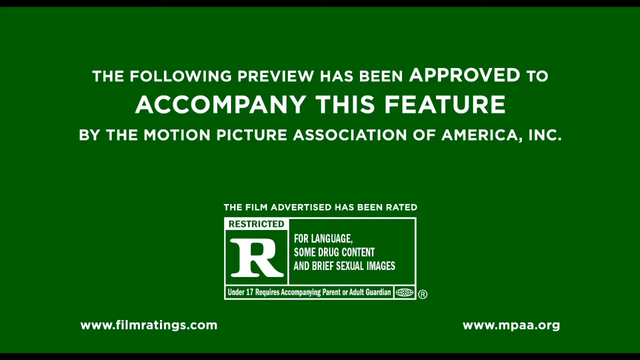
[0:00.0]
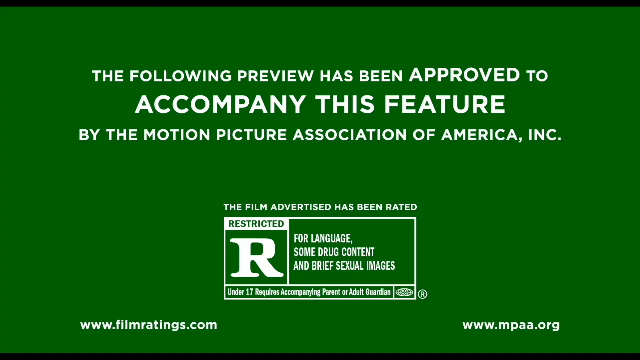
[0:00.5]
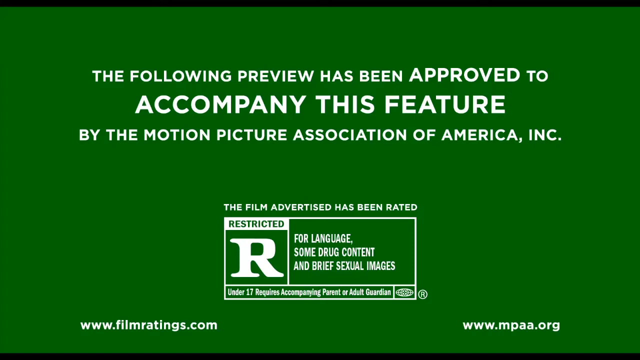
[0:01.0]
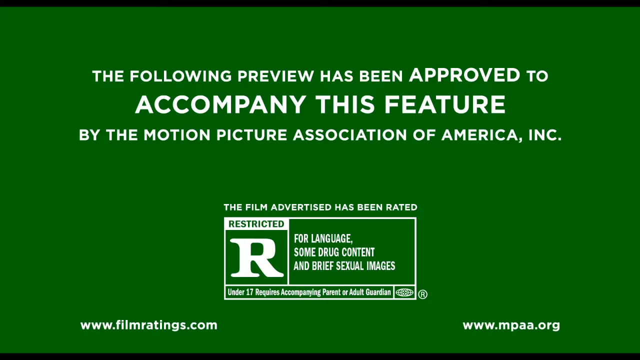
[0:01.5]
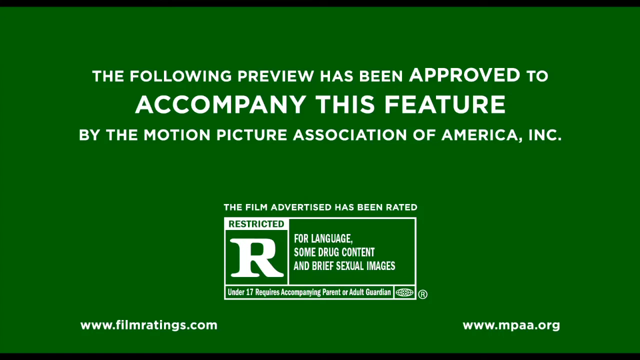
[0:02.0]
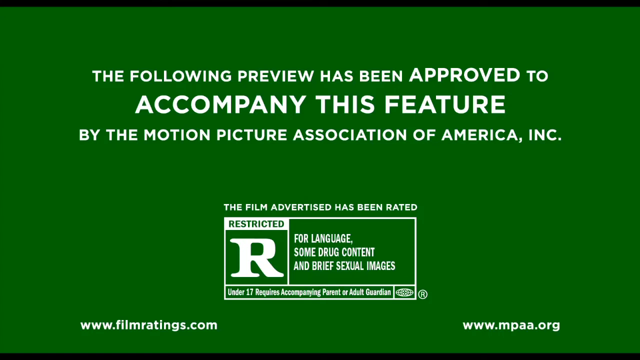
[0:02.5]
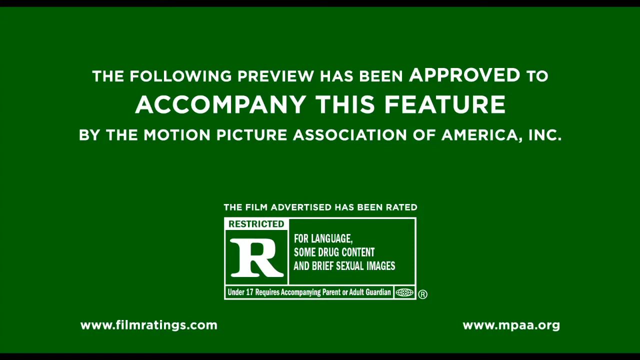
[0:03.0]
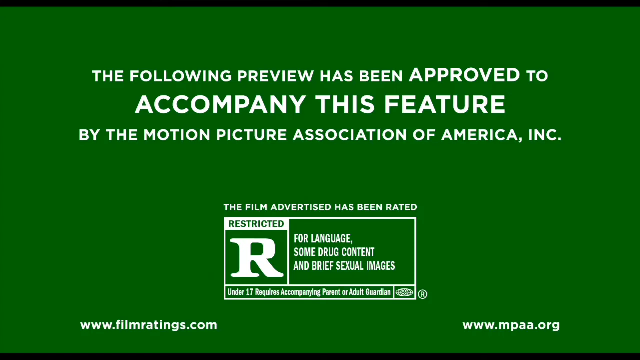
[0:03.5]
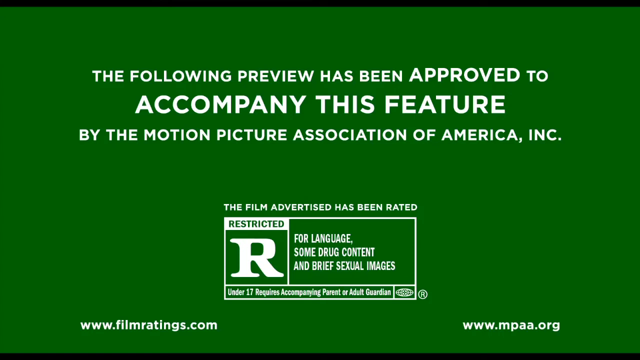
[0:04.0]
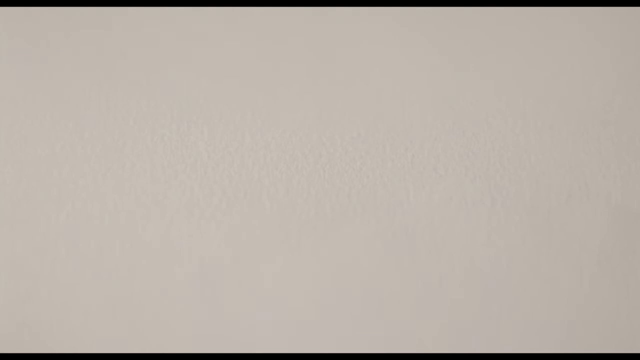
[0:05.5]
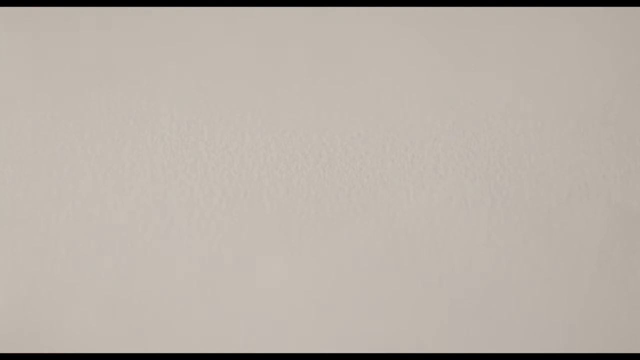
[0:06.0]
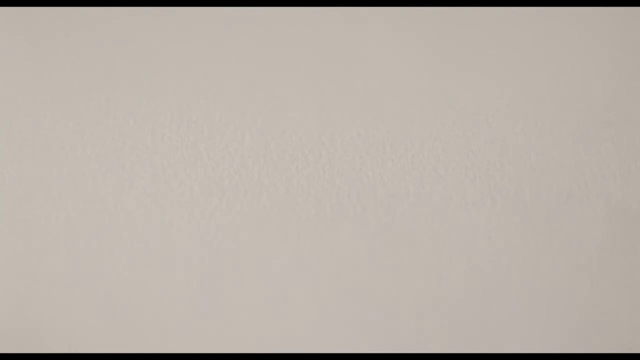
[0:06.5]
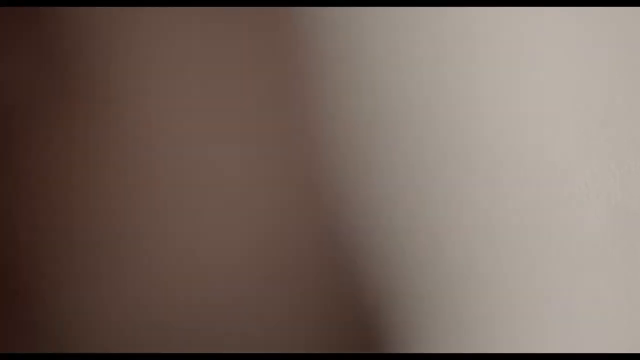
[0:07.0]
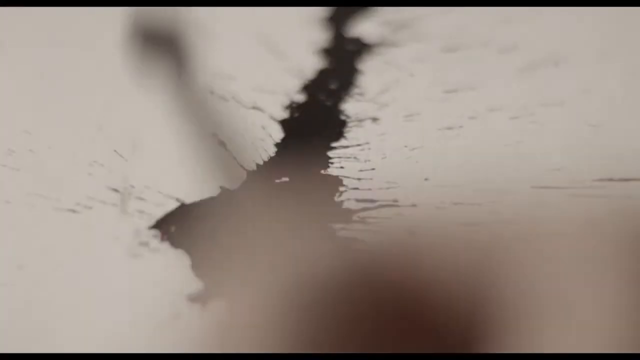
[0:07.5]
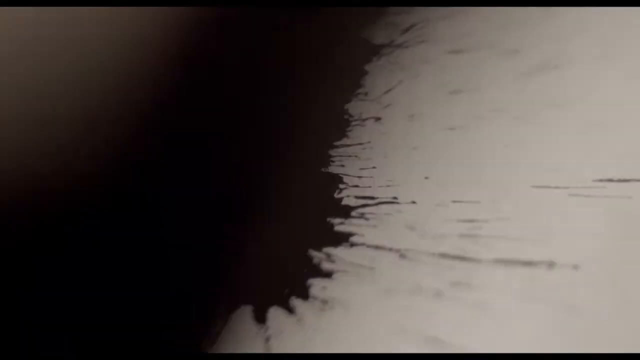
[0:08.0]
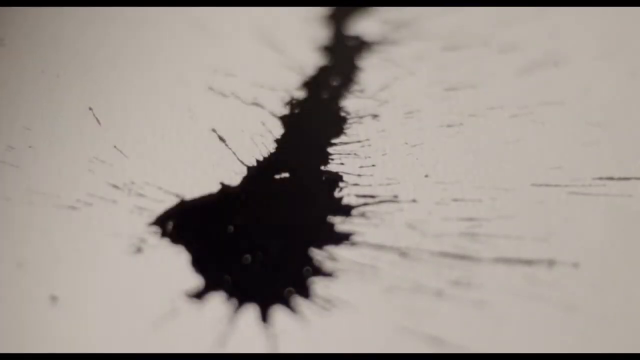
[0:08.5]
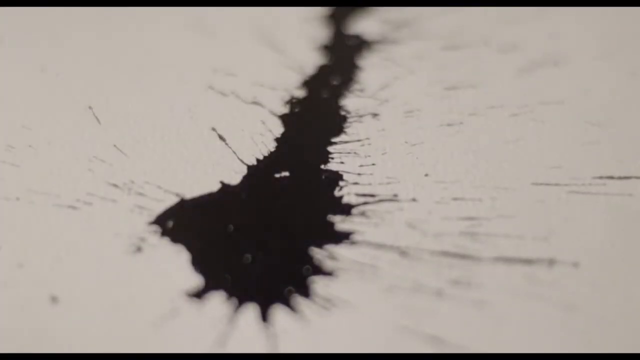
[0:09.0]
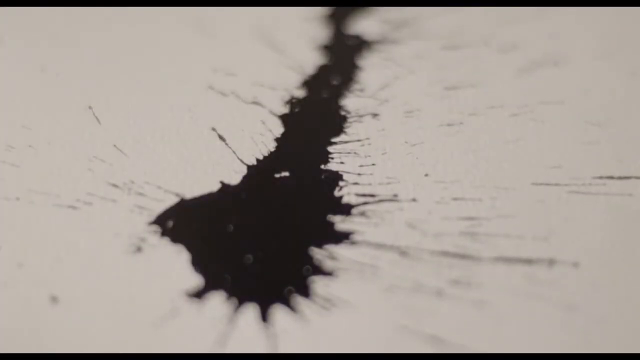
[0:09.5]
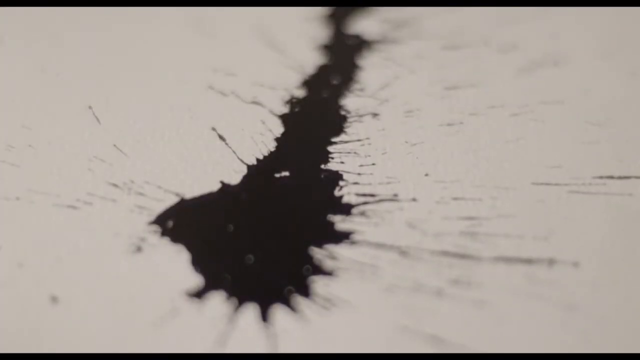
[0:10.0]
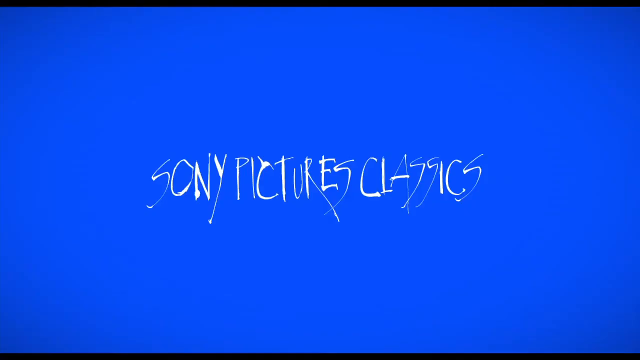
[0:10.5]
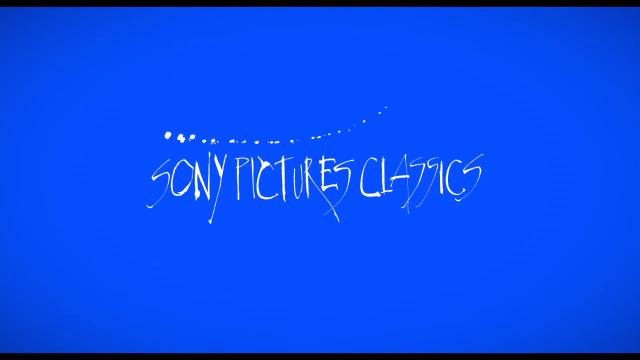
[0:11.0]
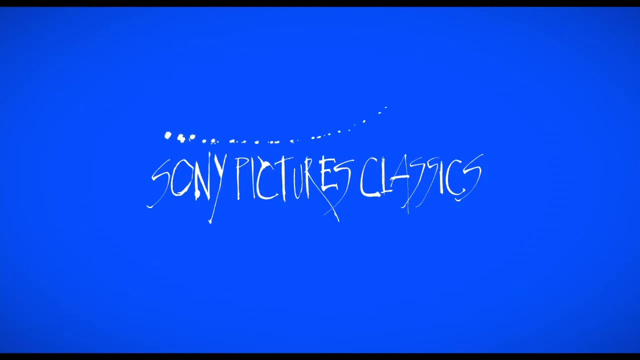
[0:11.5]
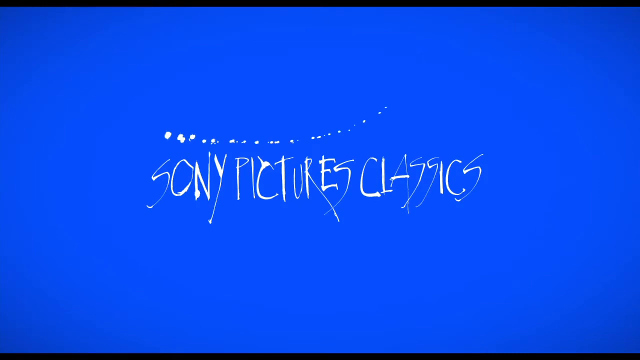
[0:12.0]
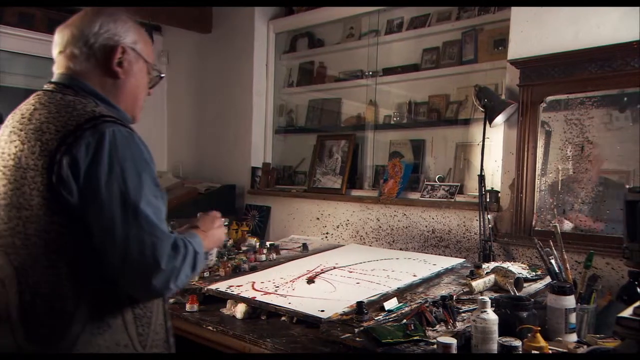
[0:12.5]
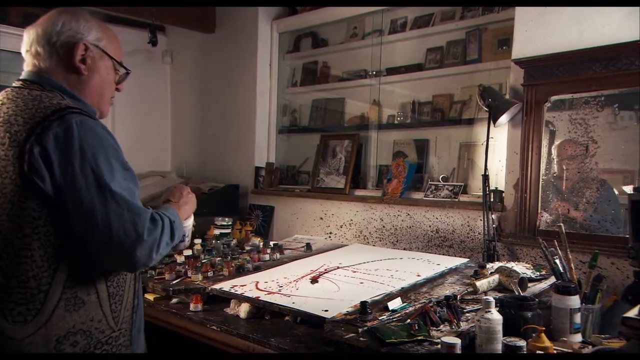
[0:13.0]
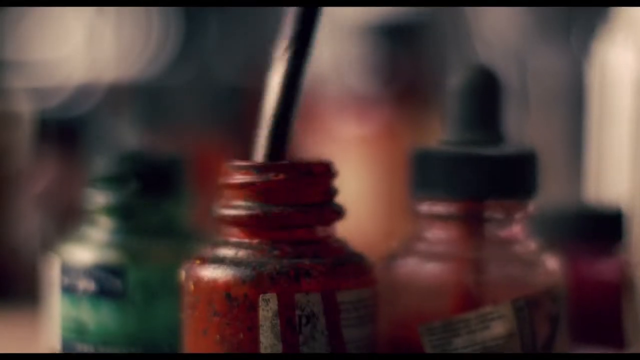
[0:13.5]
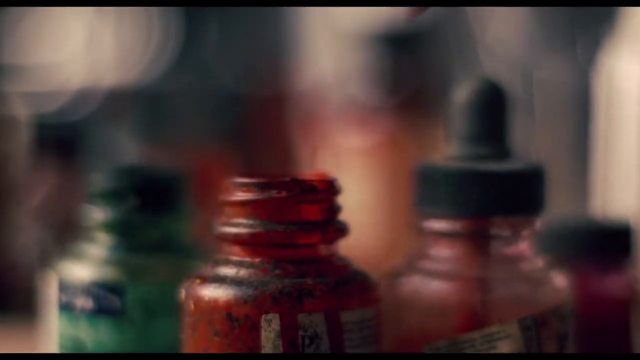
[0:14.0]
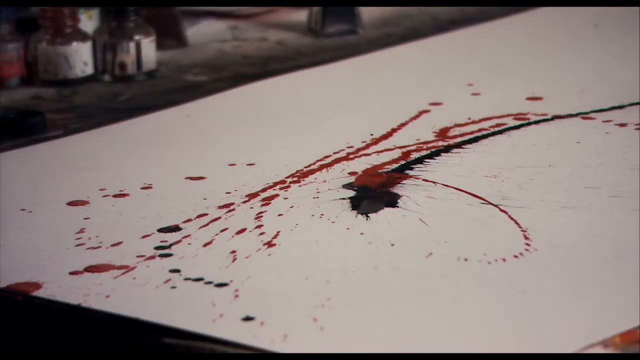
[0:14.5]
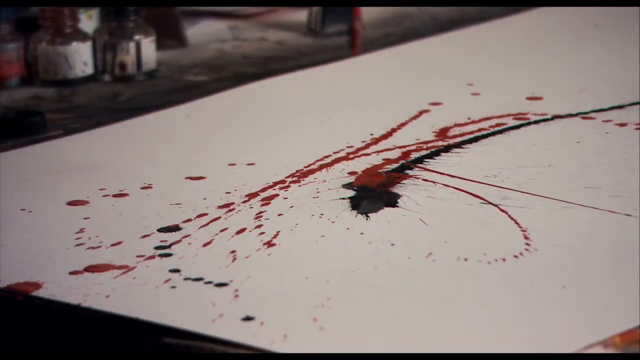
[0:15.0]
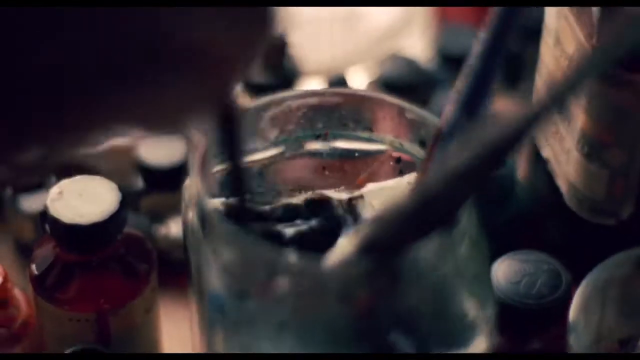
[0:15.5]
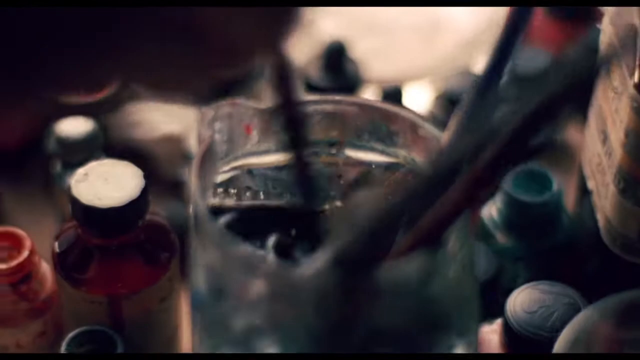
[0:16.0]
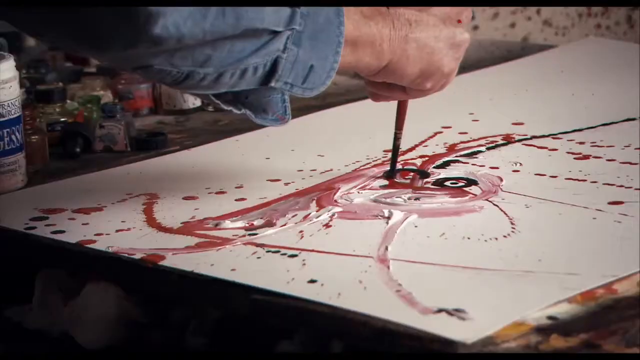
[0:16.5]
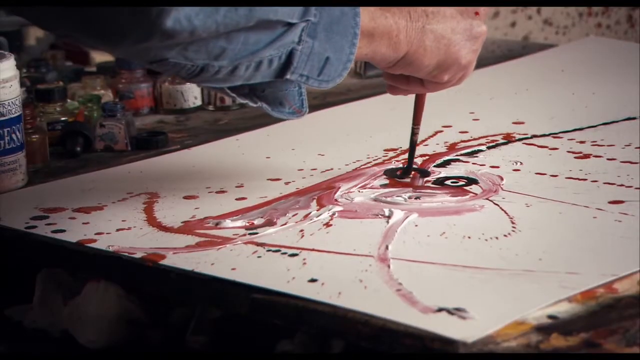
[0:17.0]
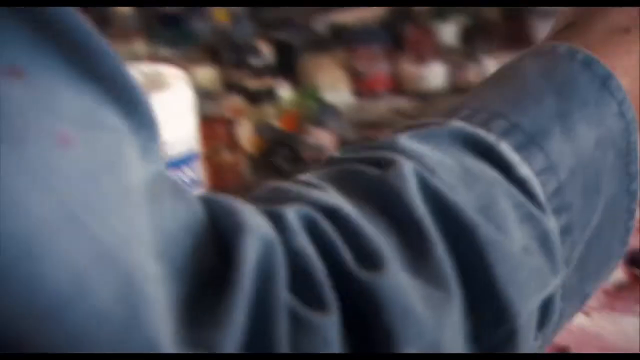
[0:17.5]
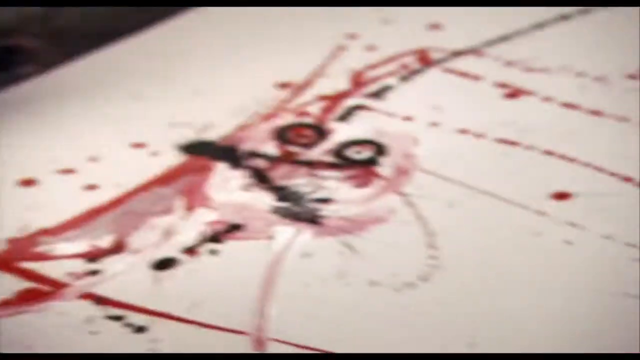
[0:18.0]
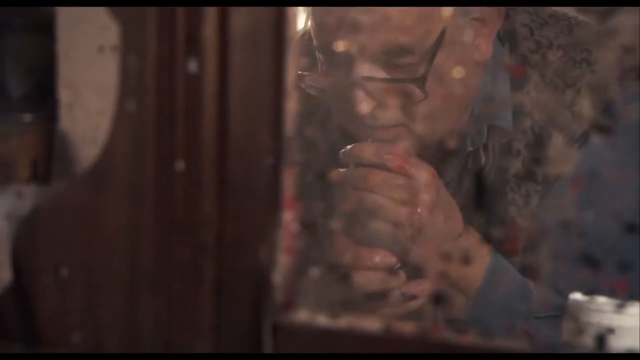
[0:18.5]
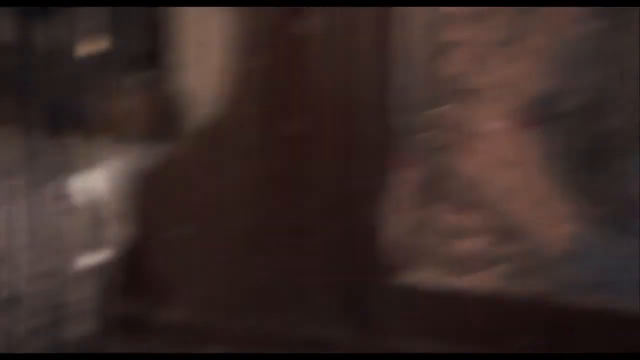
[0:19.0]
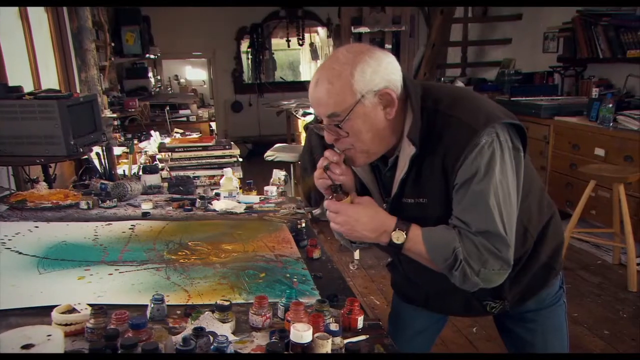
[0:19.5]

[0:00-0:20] A rating card states that "the following preview has been approved to accompany this feature by the Motion Picture Association of America." The film advertised is rated R, restricted, for "language, some drug content and brief sexual images," with under-17 viewers requiring an accompanying parent or adult guardian. The websites "www.filmratings.com" and "www.mpaa.org" are listed. Sony Pictures Classics is shown.